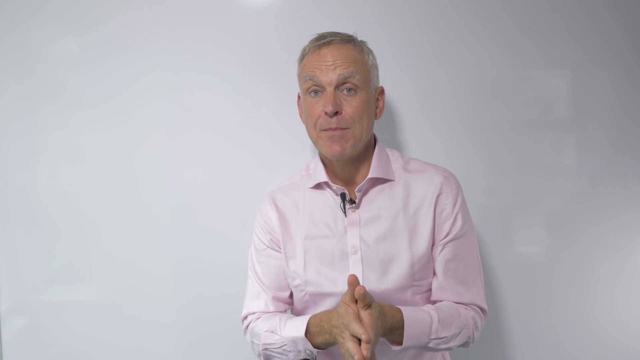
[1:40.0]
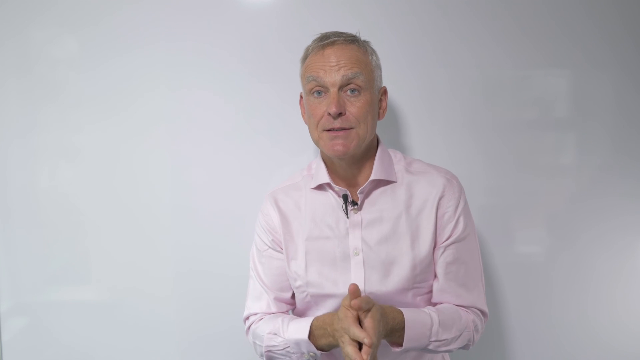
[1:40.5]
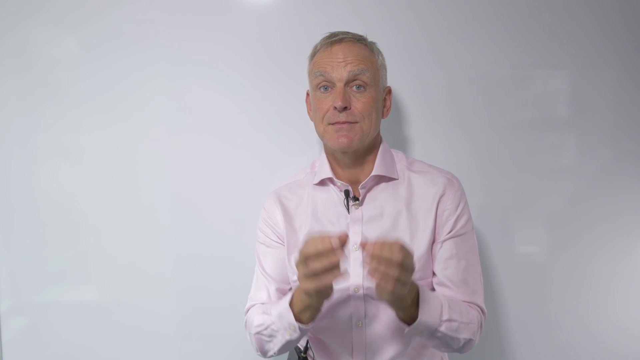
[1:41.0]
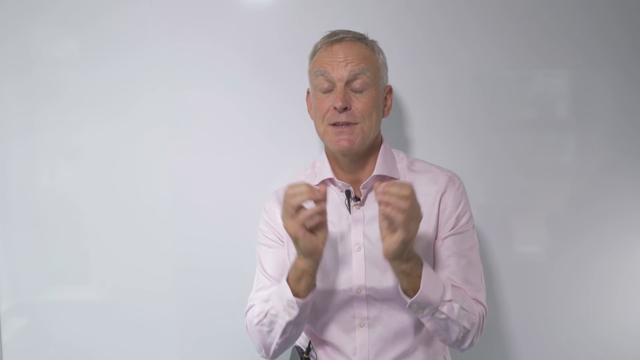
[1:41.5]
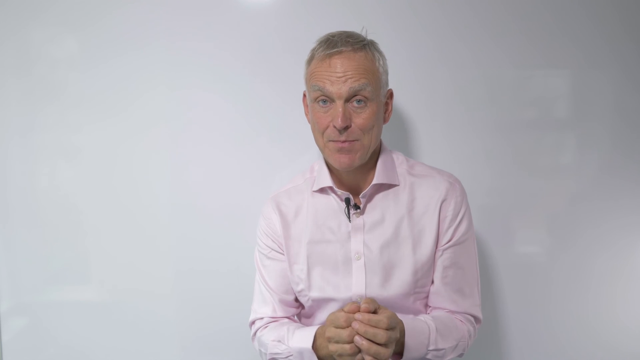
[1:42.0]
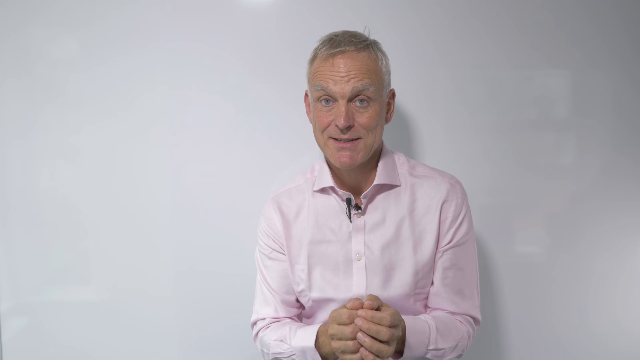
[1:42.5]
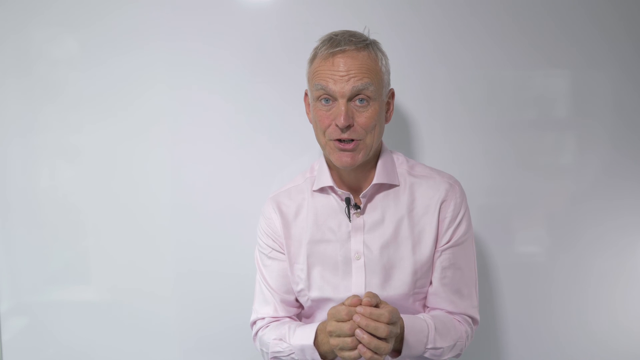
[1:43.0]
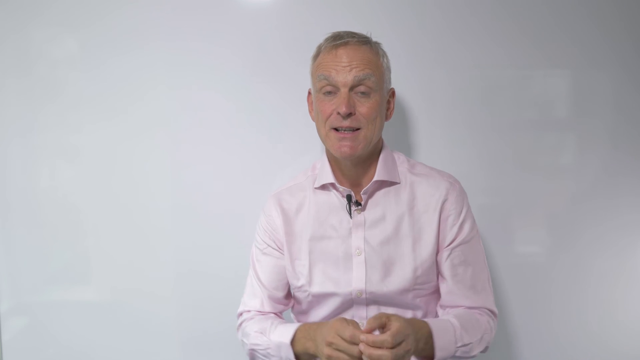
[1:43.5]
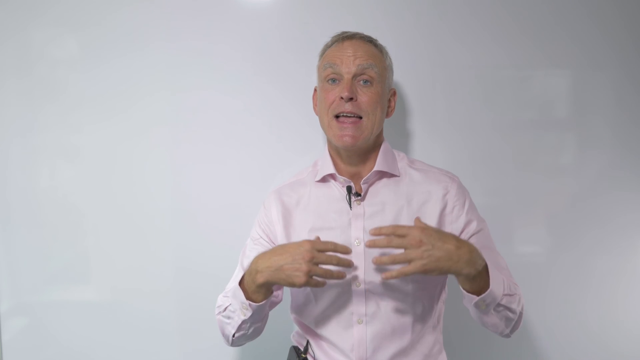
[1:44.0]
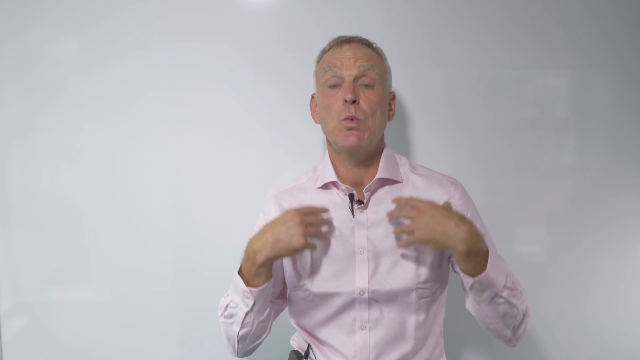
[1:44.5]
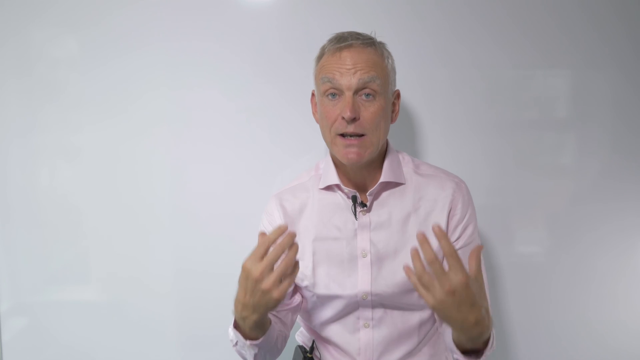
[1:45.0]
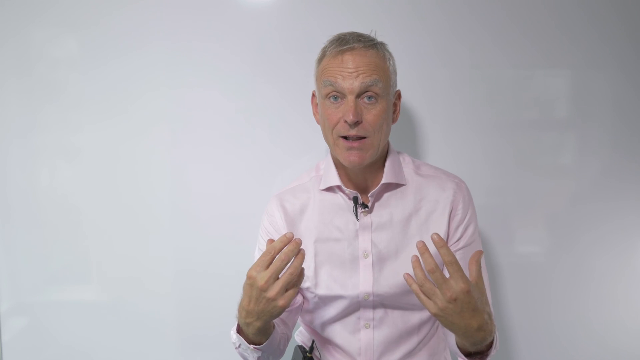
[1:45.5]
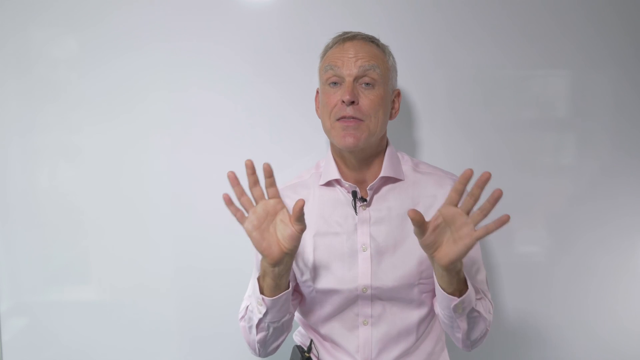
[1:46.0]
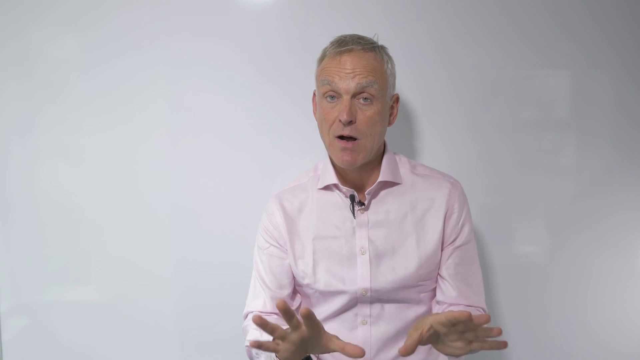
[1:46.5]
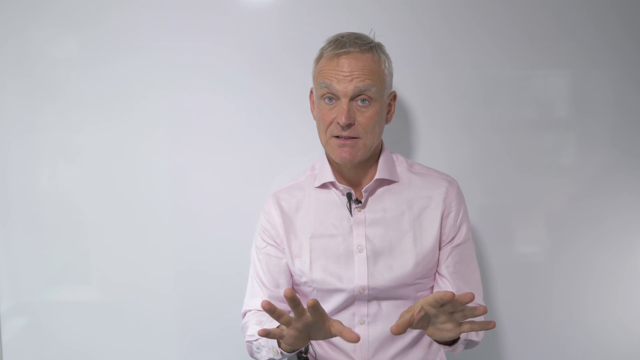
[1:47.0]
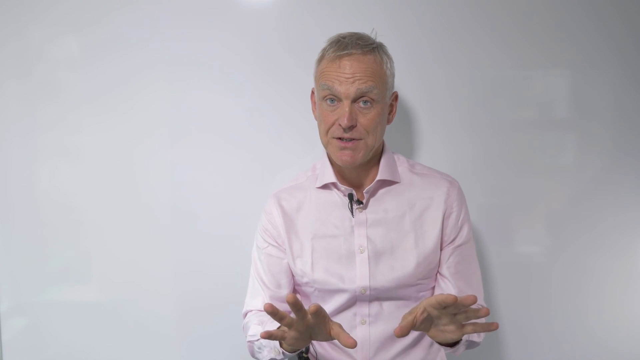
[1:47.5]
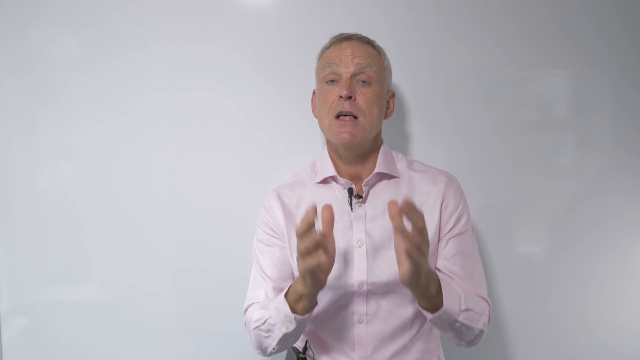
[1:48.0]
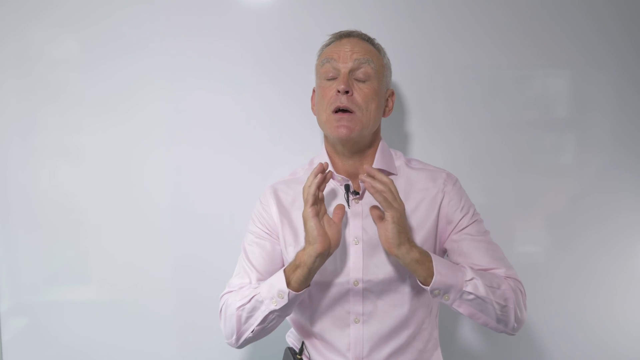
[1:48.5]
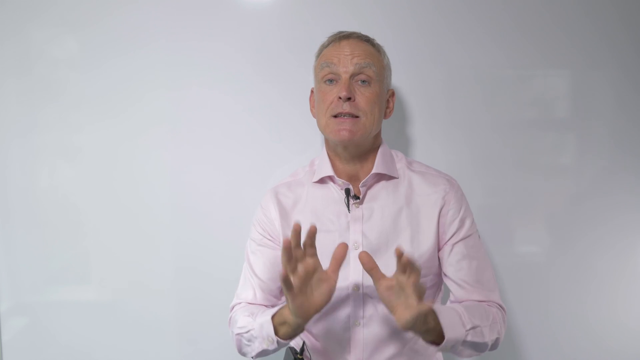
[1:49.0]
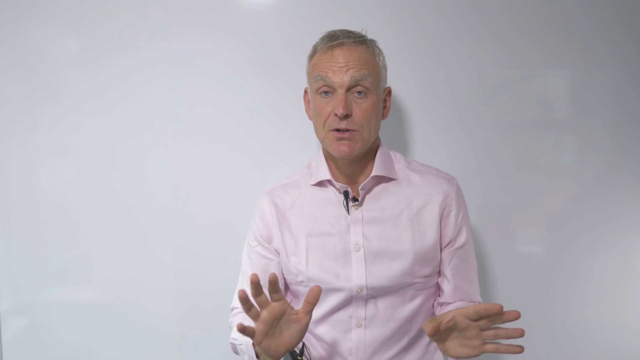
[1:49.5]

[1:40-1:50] A tall, thin, older white man, who looks to be in his late 50s or early 60s, stands in front of a white wall, seen from the waist up. He has gray hair that is white on the sides and a little darker on top, and he wears a light pink button-up shirt with a small microphone clipped to the collar. As he speaks, he raises his hands in front of him, then drops them down and clasps them together. He motions toward his chest area, then holds his hands with palms facing down and fingers straight. His face is very expressive: he has large blue eyes, raises his eyebrows and moves his head up and down as he speaks.